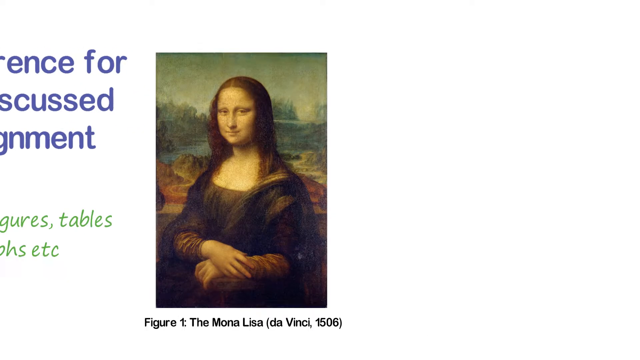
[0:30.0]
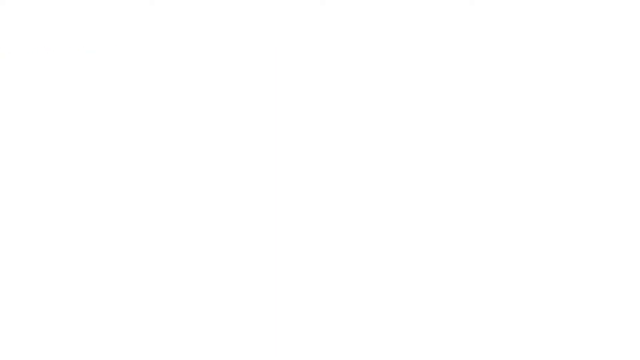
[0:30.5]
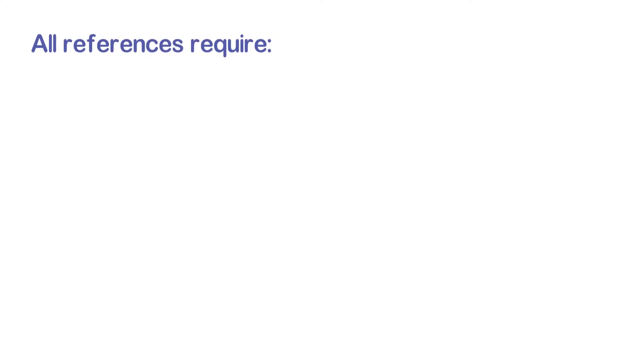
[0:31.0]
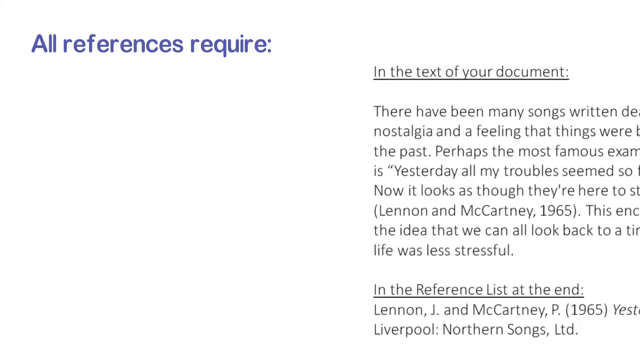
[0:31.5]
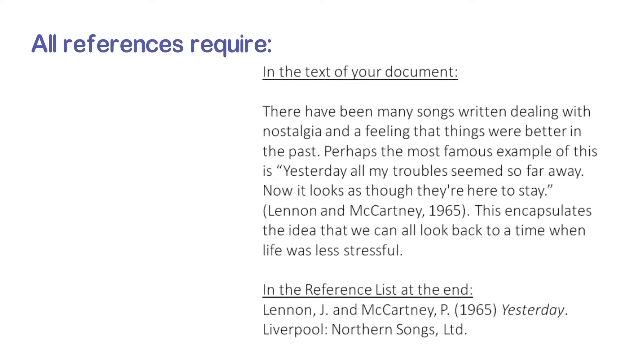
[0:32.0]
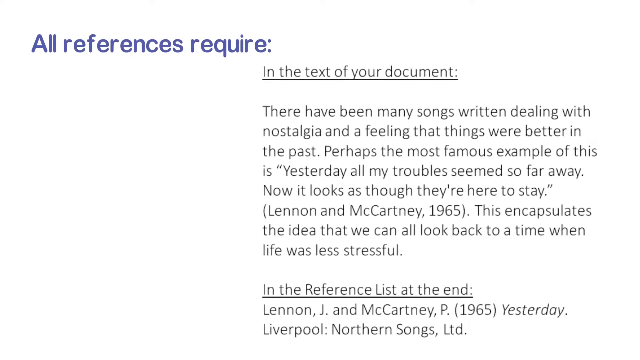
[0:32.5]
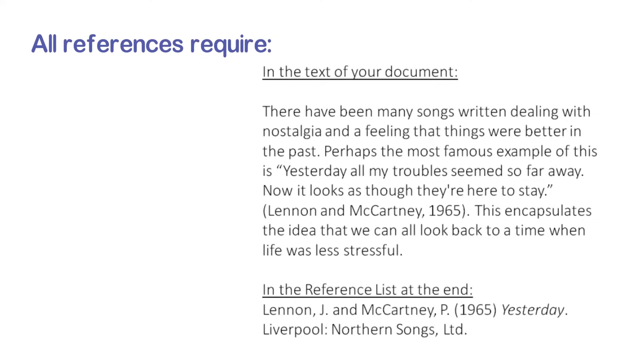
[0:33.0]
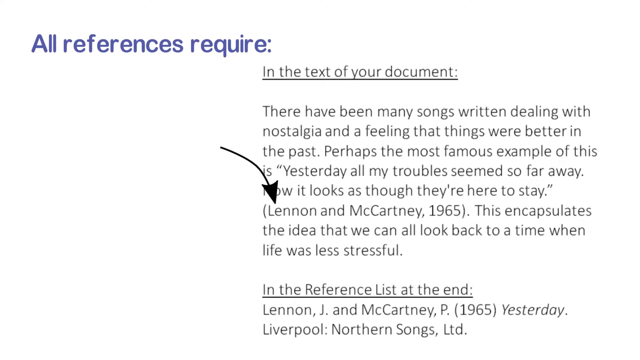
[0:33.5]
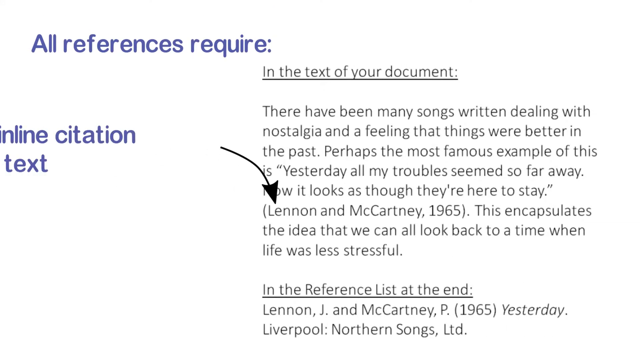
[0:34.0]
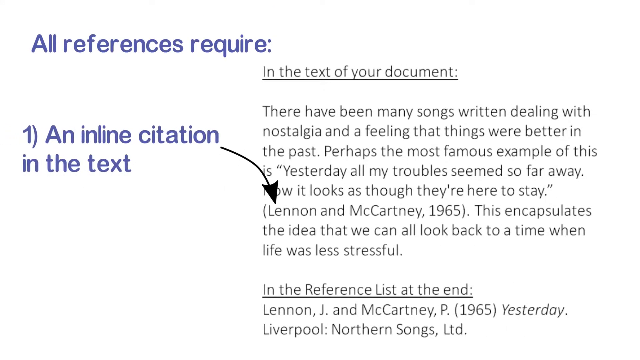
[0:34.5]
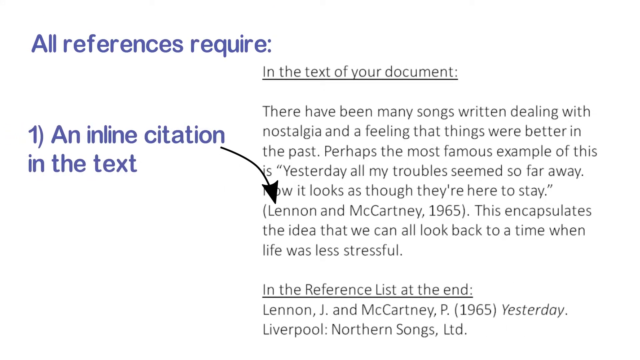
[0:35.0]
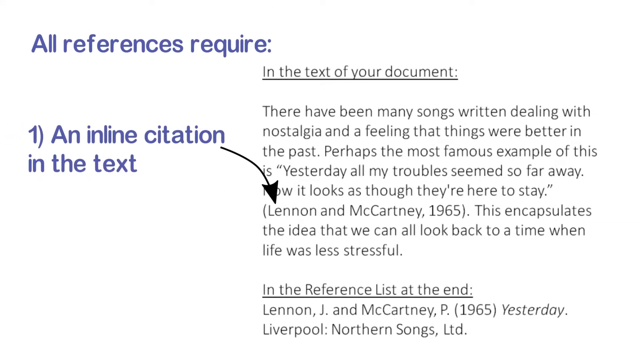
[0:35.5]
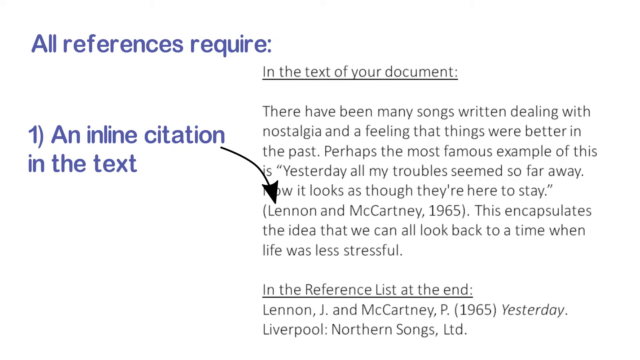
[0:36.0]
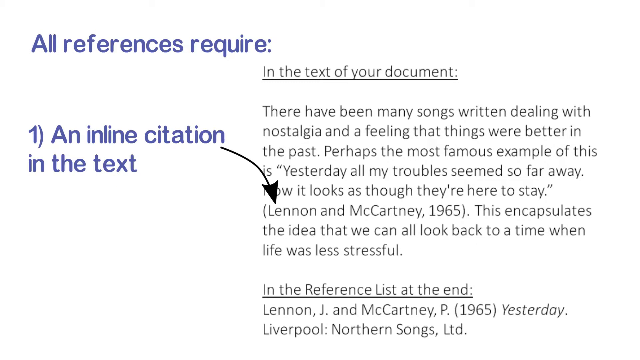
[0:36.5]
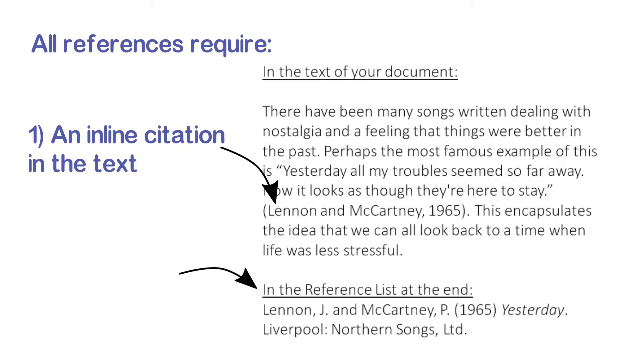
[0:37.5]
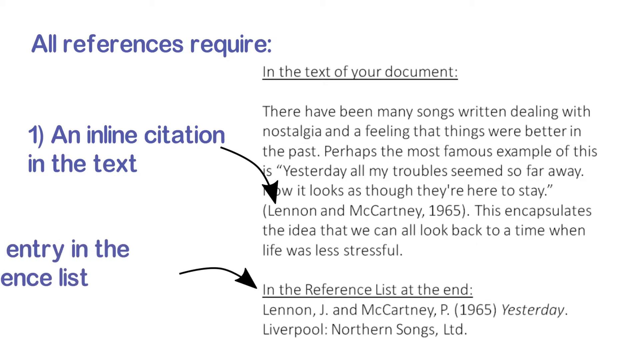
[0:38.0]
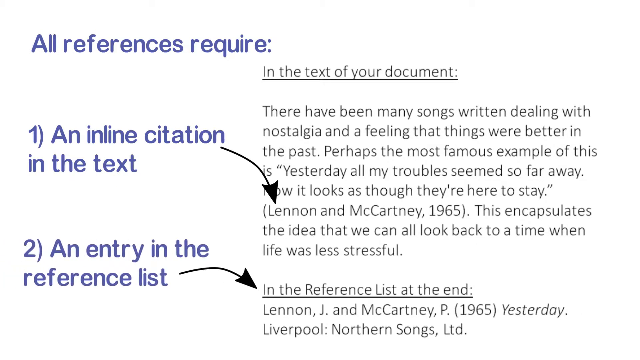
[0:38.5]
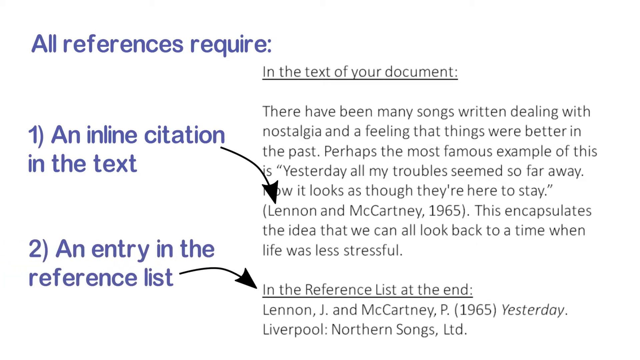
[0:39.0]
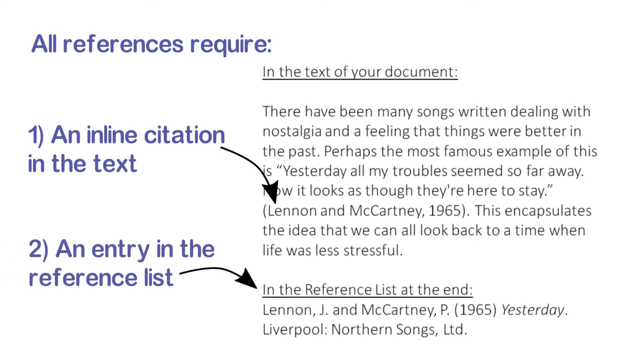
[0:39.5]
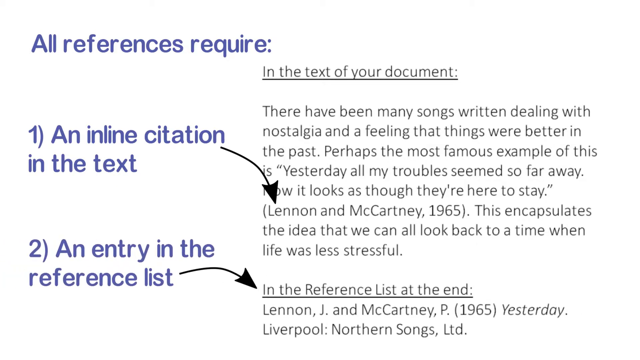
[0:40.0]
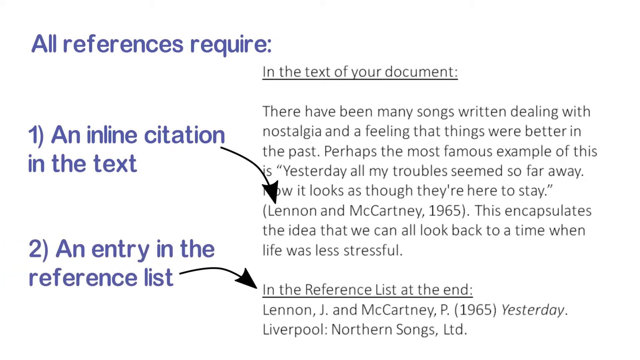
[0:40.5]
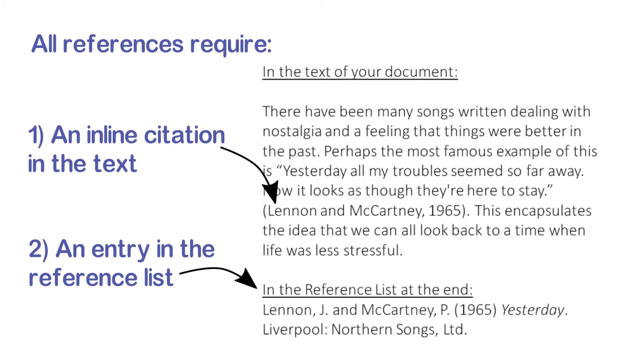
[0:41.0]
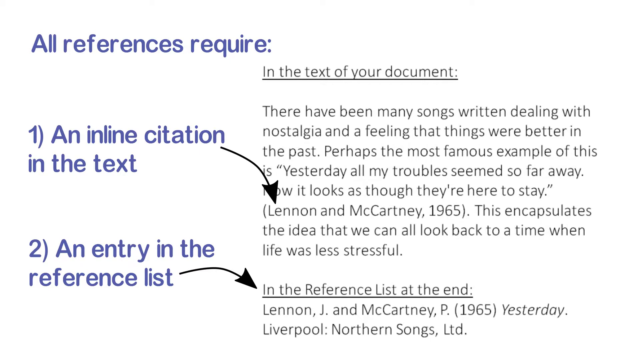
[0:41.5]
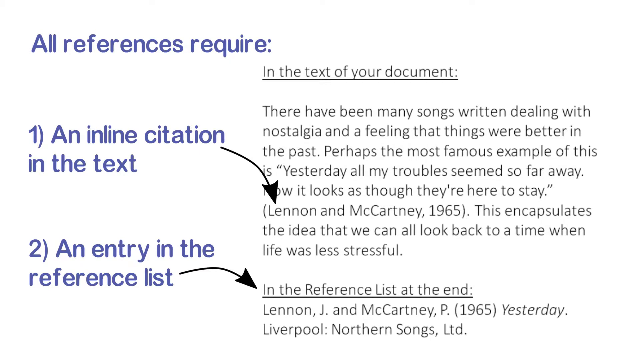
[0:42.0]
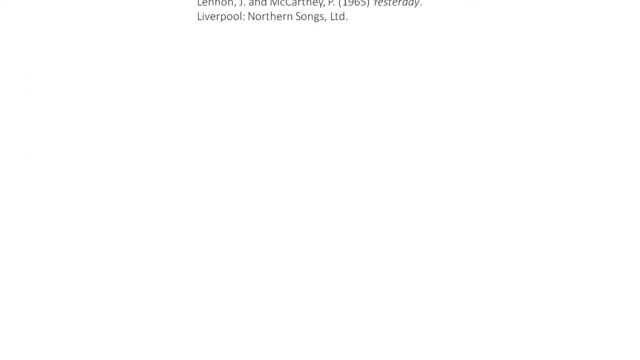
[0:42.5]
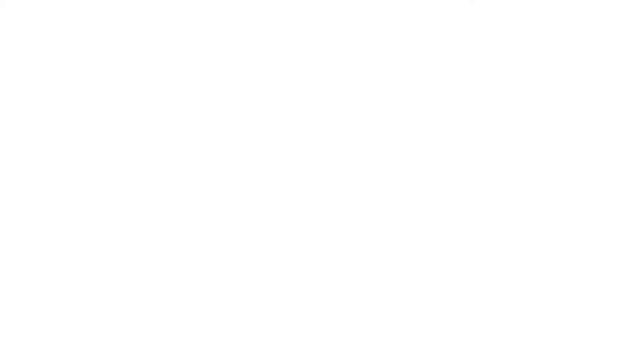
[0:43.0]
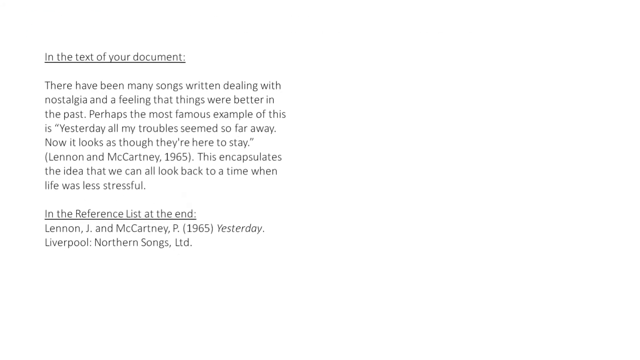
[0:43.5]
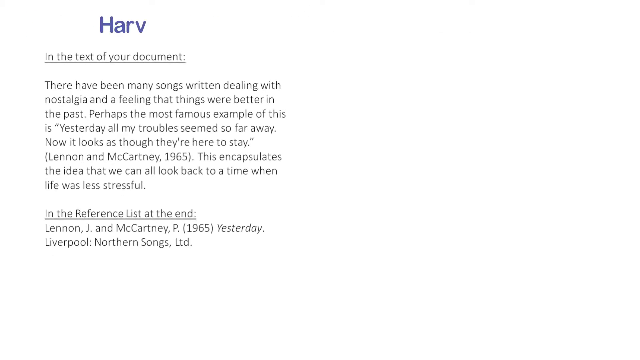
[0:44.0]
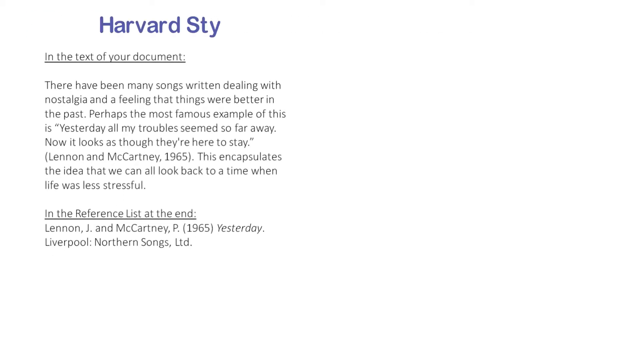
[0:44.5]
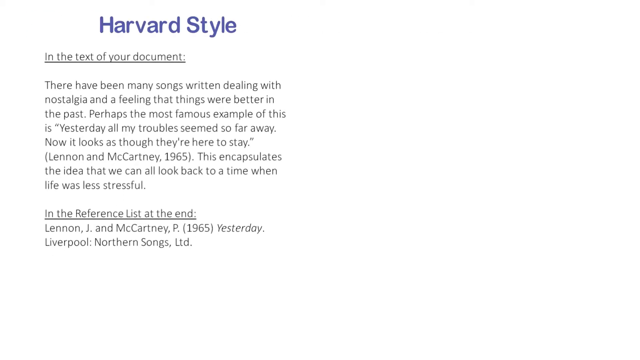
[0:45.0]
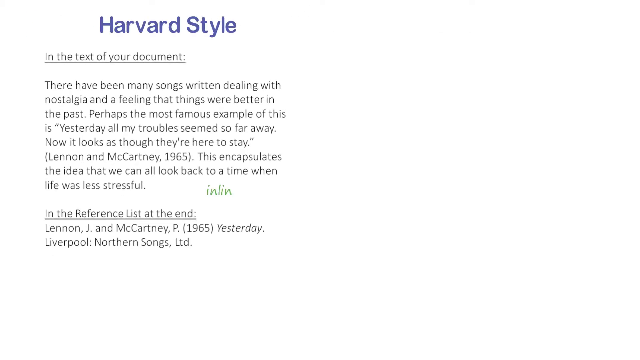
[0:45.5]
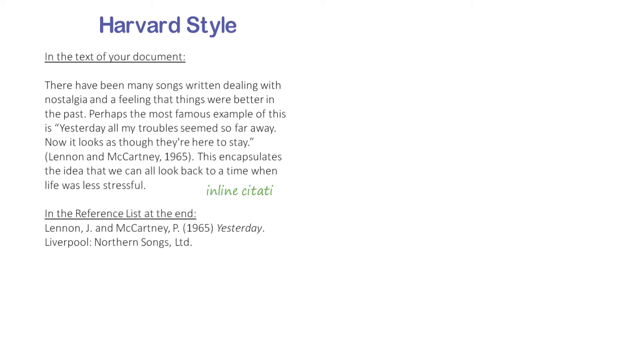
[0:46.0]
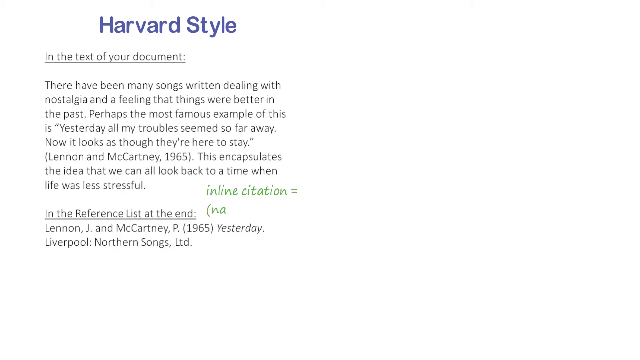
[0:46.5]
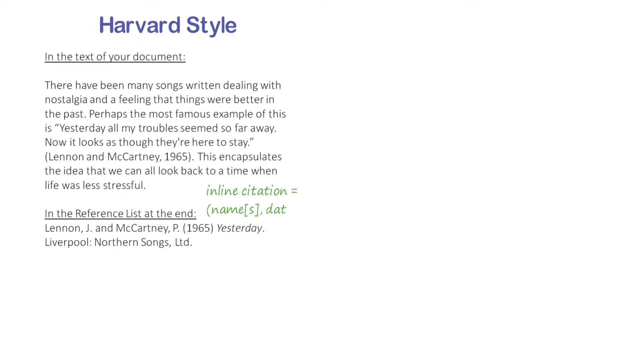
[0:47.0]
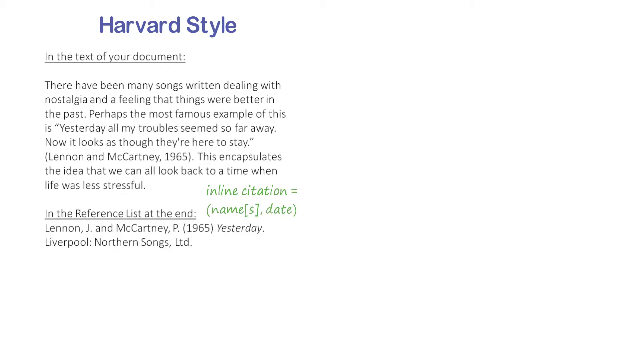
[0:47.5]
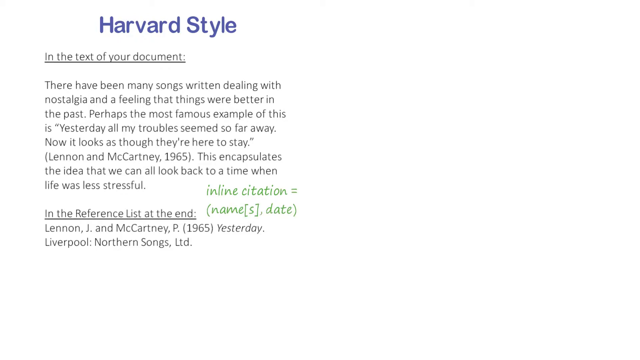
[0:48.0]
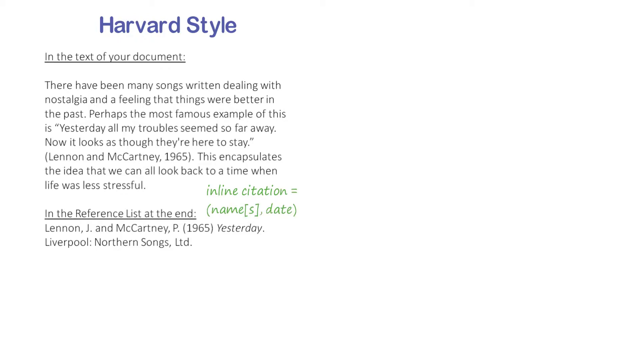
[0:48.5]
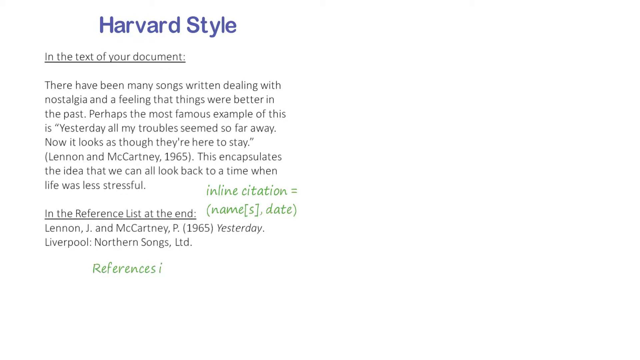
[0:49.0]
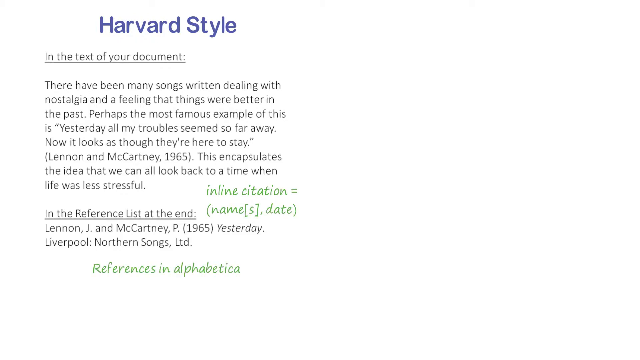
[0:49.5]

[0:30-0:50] The screen is white. In the top left-hand corner is the text "All references required." Under that, in blue, is number one, "An inline citation in the text," and a black arrow goes off its right side to a paragraph reading "In the text of your document: There have been many songs written dealing with nostalgia and a feeling that things are better in the past. Perhaps the most famous example of this is Yesterday. All my troubles seemed so far away, now it looks as though they're here to stay (Lennon McCartney 1965). This encapsulates the idea that we can all look back to a time when life was less stressful." In the bottom left corner of the same screen is the text "An entry in the reference list," with a black arrow going off to the right and pointing to the text "In the reference list at the end: Lennon J and McCartney P 1965 Yesterday Liverpool Northern Songs LTD."